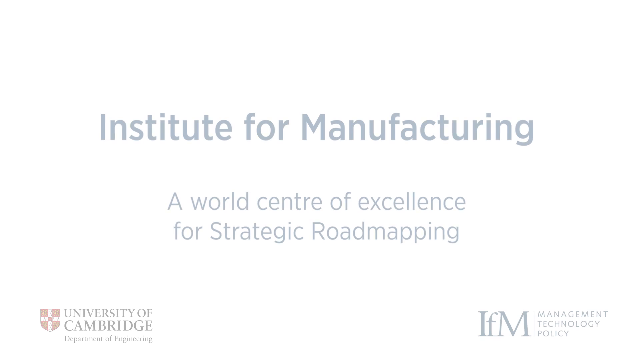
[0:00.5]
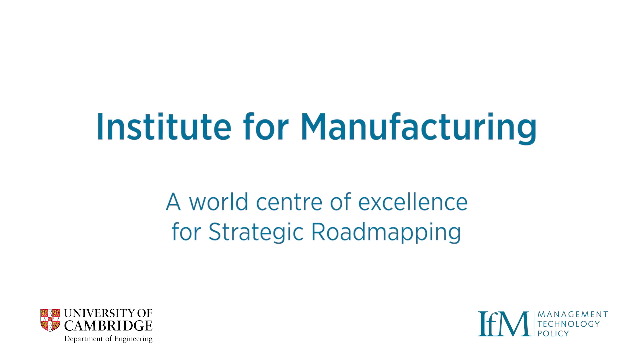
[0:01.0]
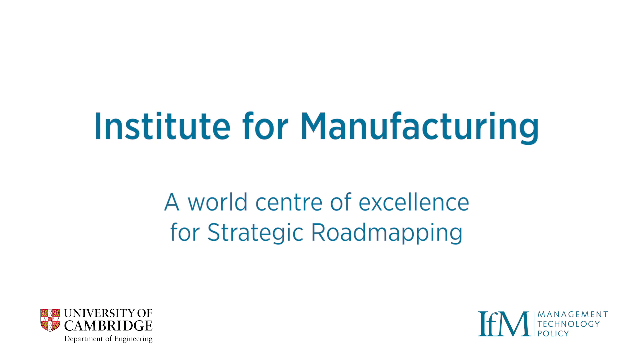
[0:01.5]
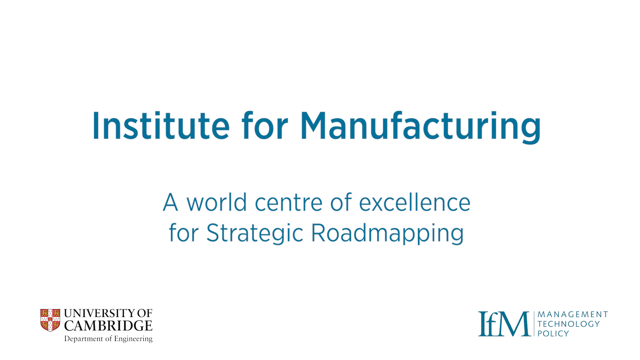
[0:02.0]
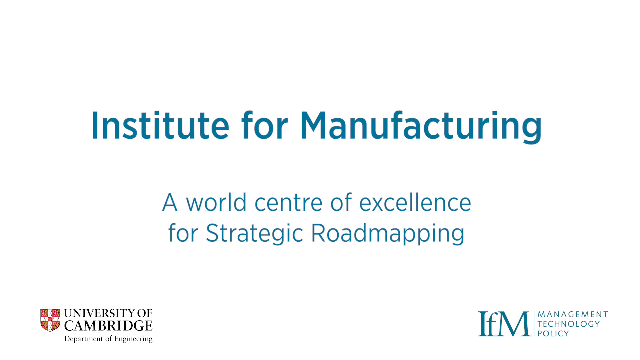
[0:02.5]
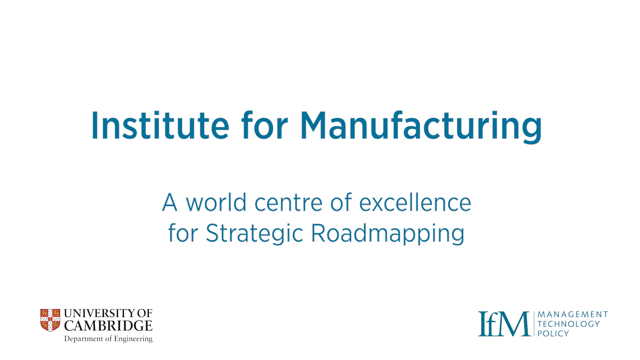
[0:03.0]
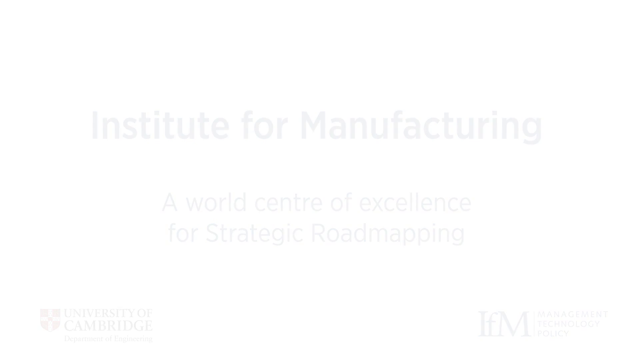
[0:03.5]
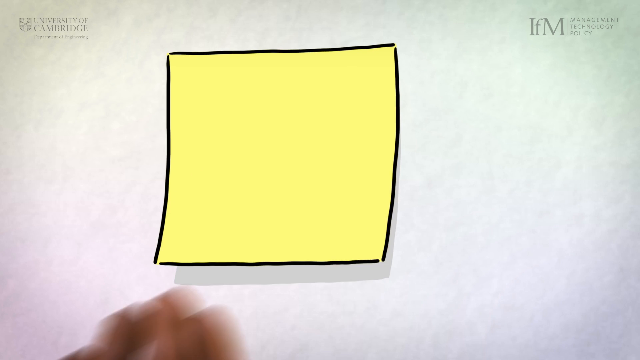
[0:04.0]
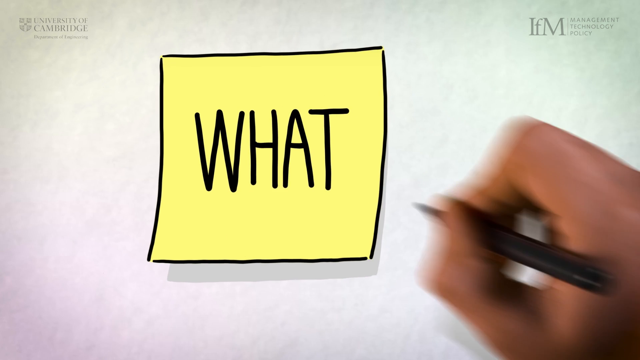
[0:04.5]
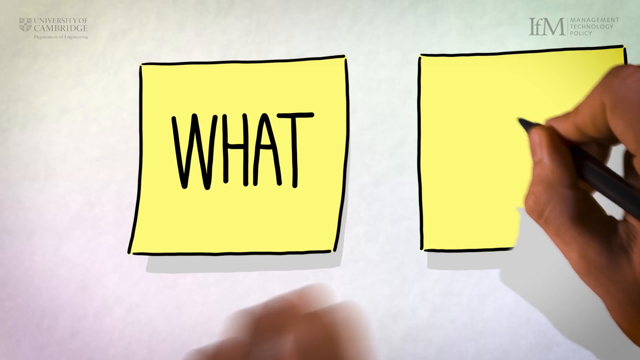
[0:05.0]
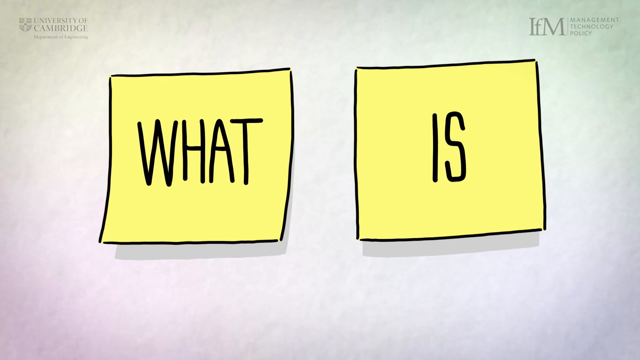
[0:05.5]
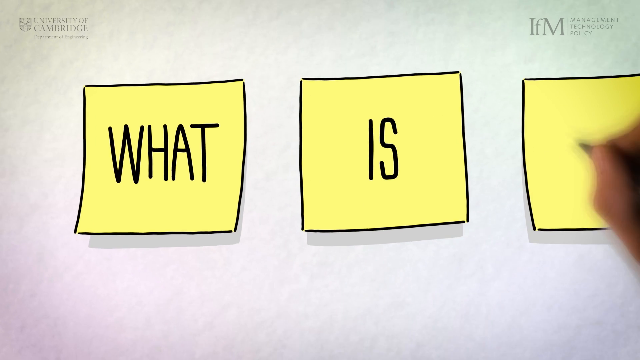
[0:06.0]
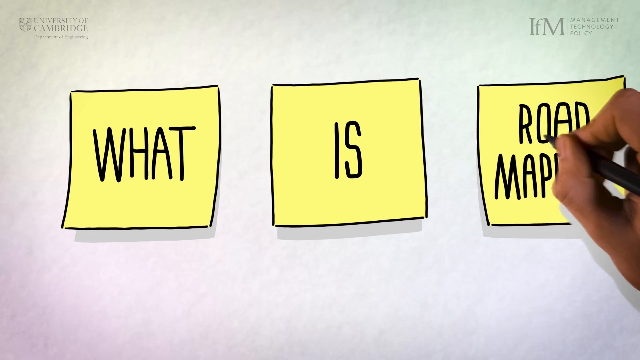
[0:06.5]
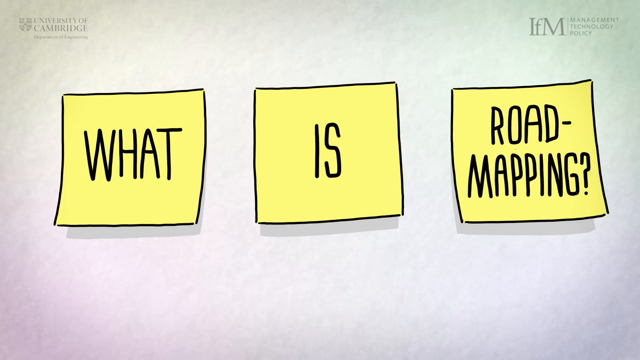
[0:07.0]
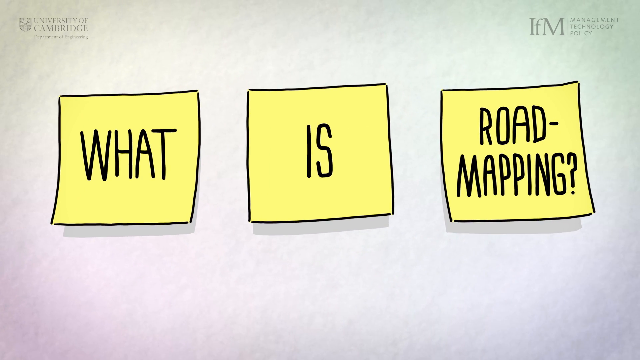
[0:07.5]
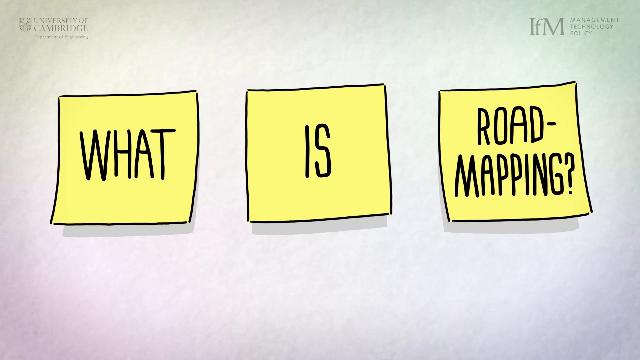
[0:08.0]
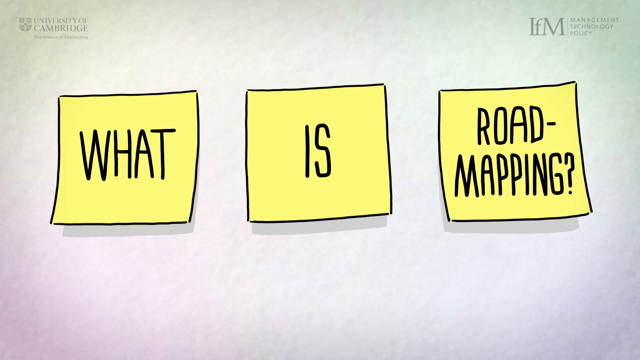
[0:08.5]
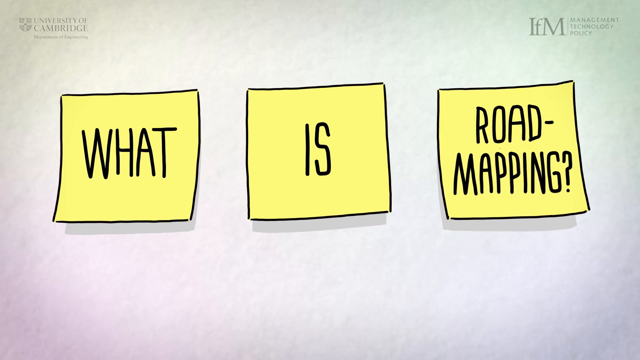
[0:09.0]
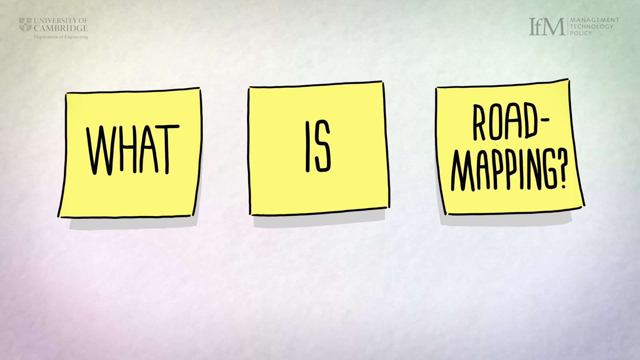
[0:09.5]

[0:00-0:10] A blank white screen appears, and then words flash onto it reading "Institute for Manufacturing" in all blue as the title. Underneath the title is a subtitle that says "a world center of excellence for strategic road mapping." In the bottom left-hand corner is a University of Cambridge logo that looks similar to a shield: red with a white cross in the middle. In the bottom right-hand corner is another logo that says "IFM management technology policy." Next comes an animation of postcards: a person sticks animated postcards, or Post-it notes, onto a white background. Each one has a word on it, and the three words read "what," "is," and "road mapping."